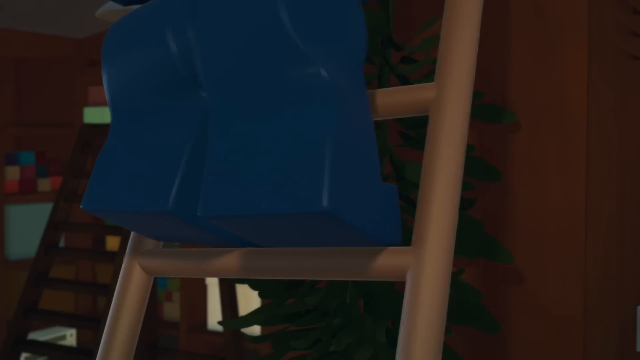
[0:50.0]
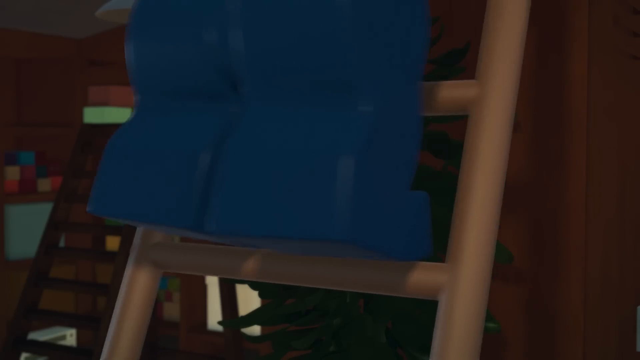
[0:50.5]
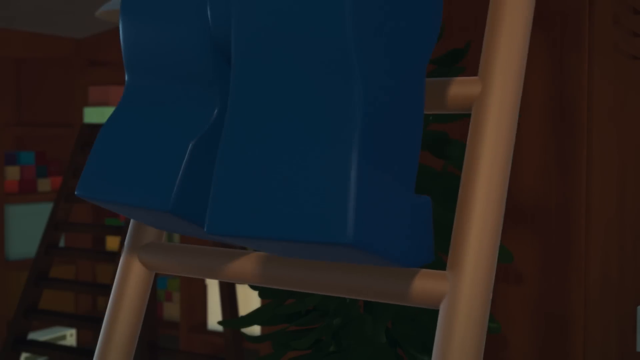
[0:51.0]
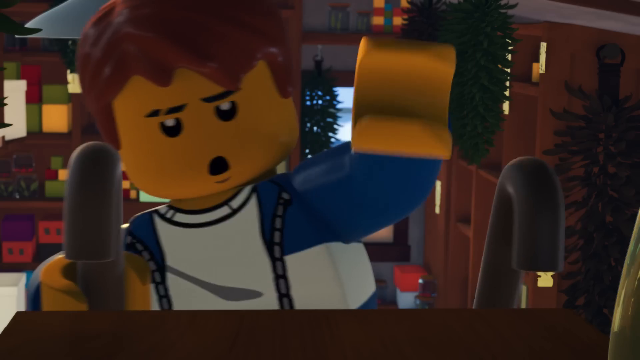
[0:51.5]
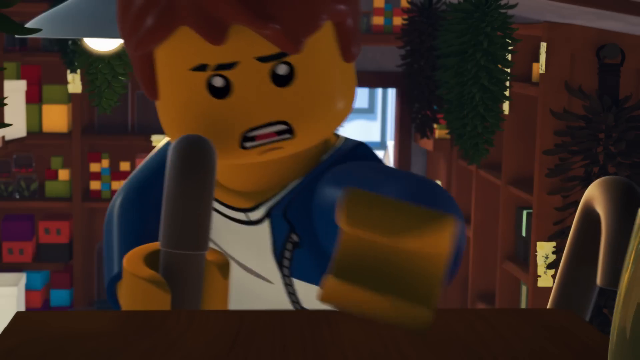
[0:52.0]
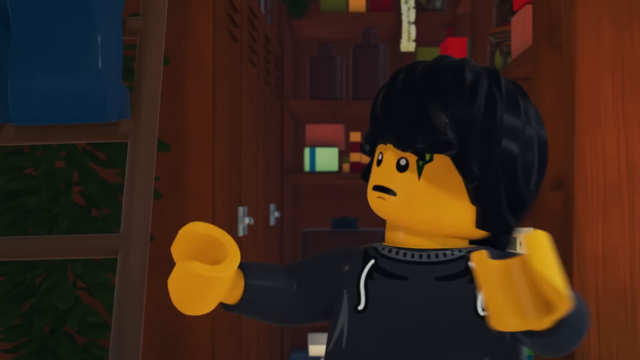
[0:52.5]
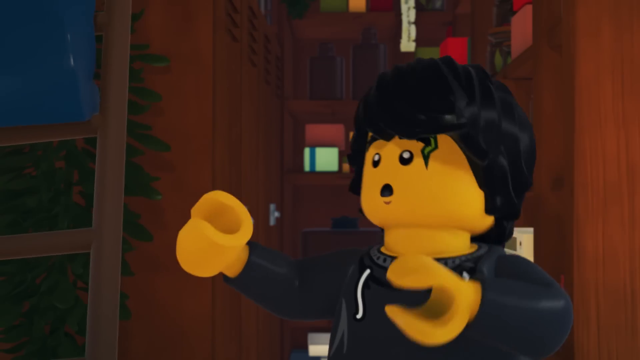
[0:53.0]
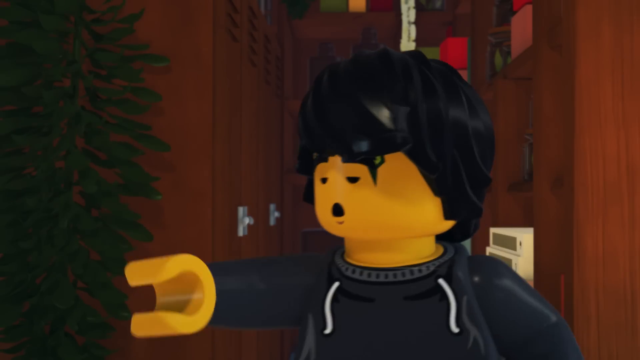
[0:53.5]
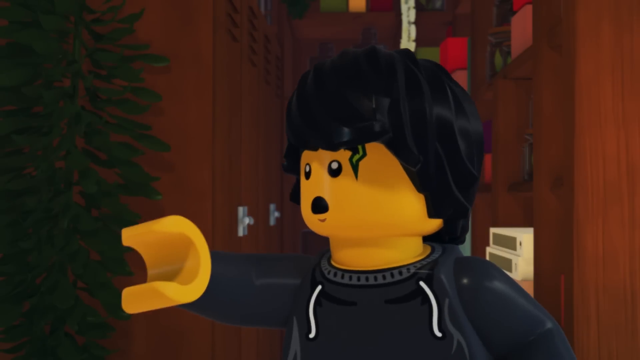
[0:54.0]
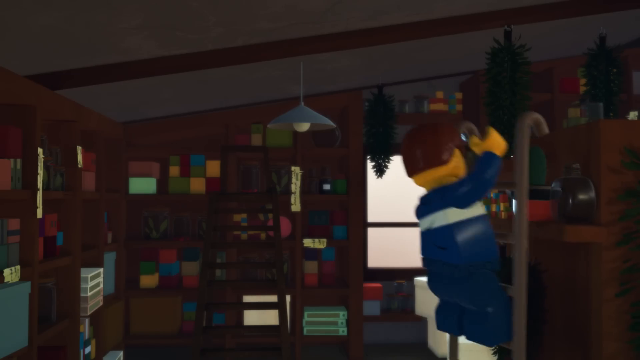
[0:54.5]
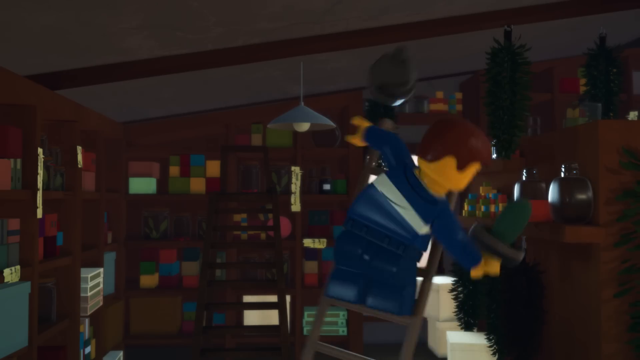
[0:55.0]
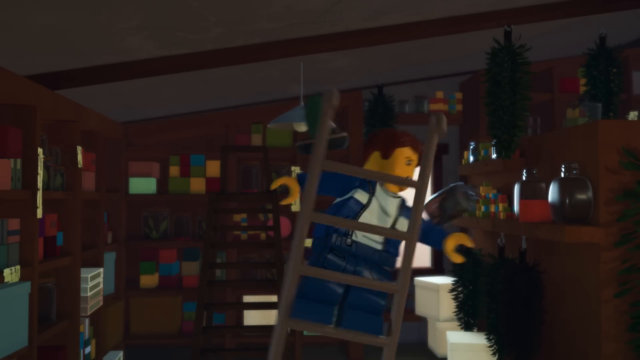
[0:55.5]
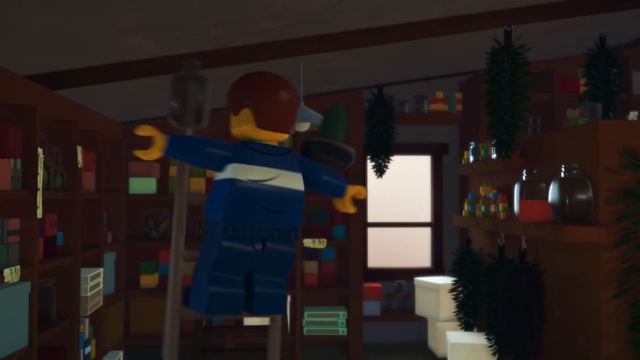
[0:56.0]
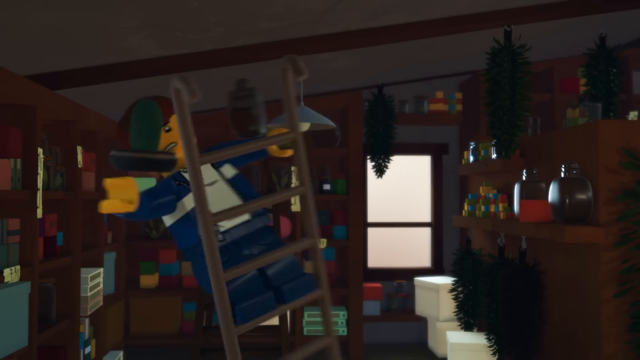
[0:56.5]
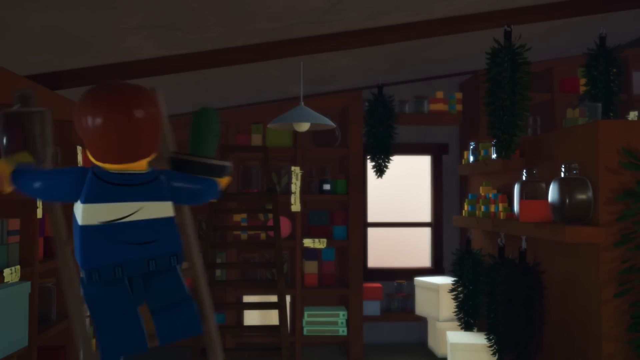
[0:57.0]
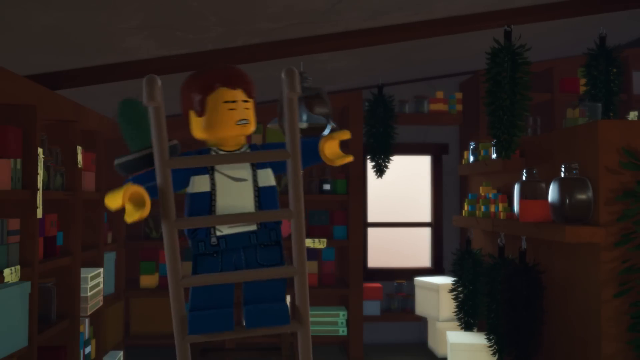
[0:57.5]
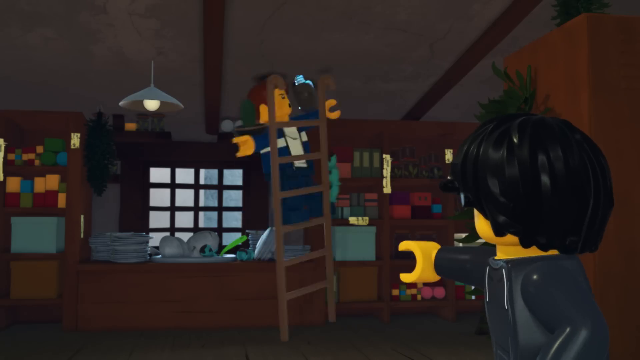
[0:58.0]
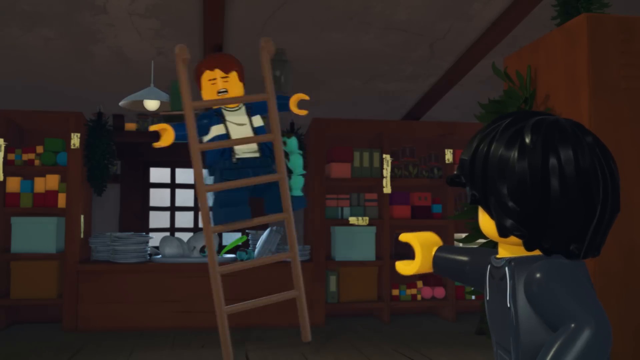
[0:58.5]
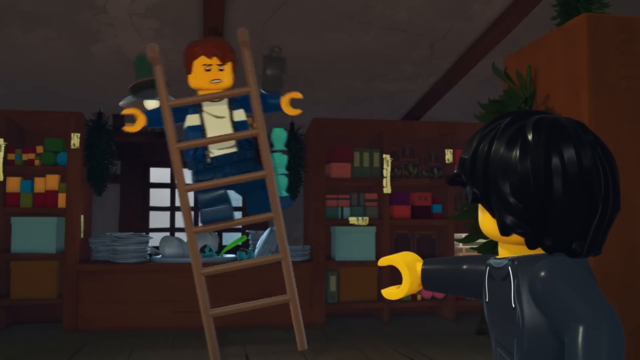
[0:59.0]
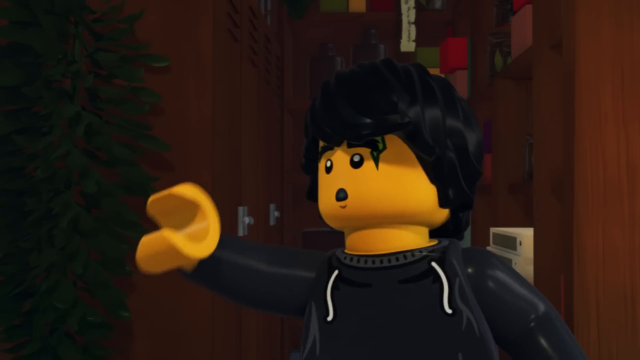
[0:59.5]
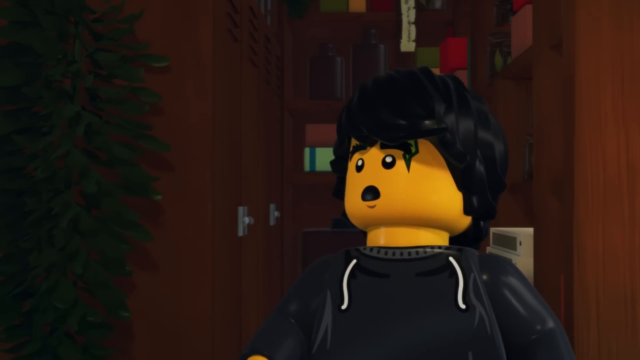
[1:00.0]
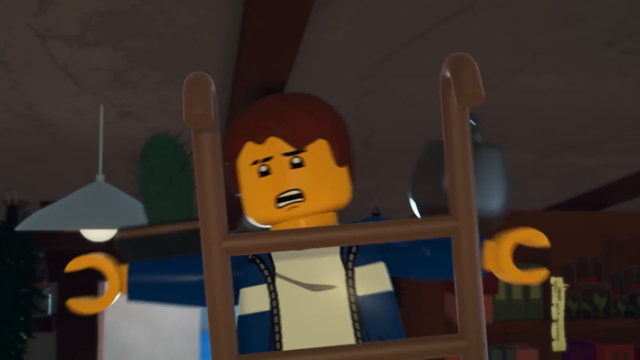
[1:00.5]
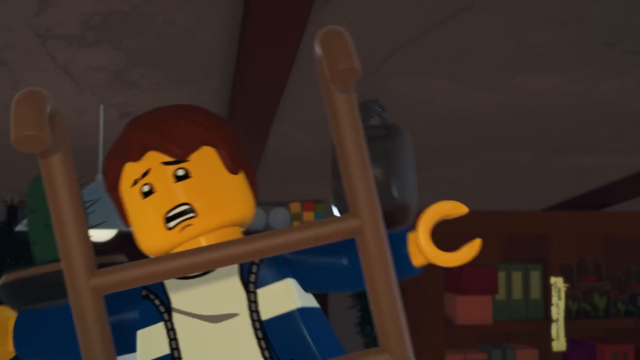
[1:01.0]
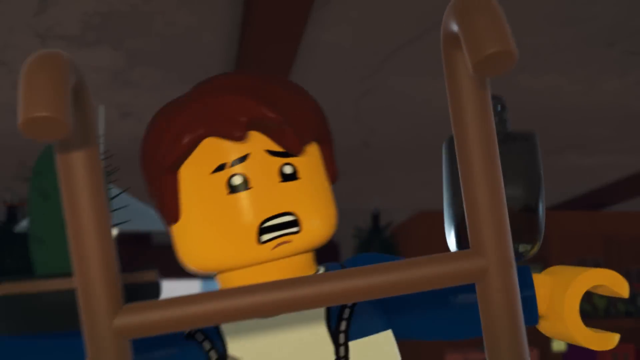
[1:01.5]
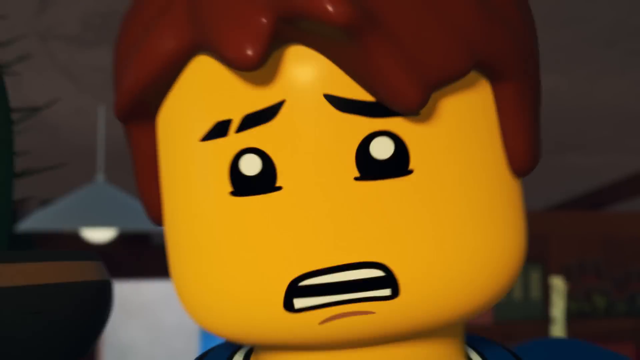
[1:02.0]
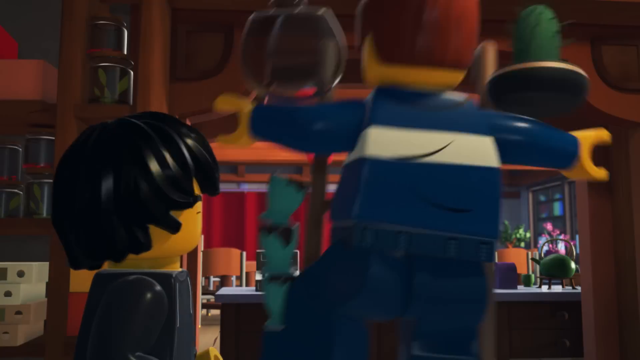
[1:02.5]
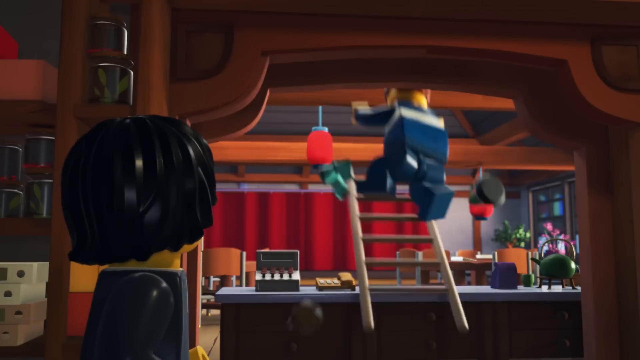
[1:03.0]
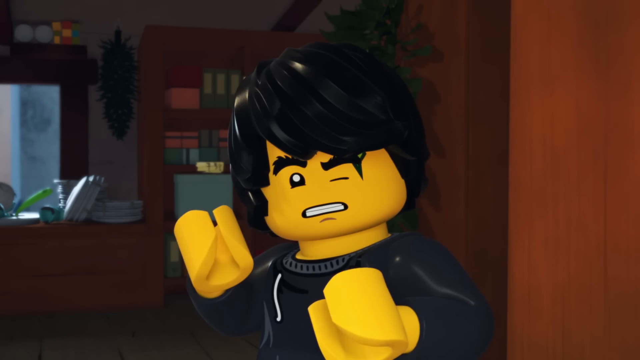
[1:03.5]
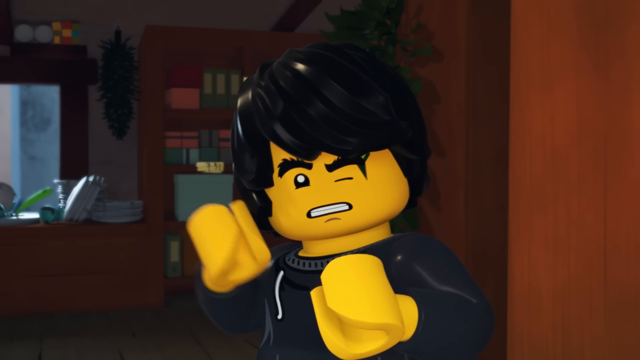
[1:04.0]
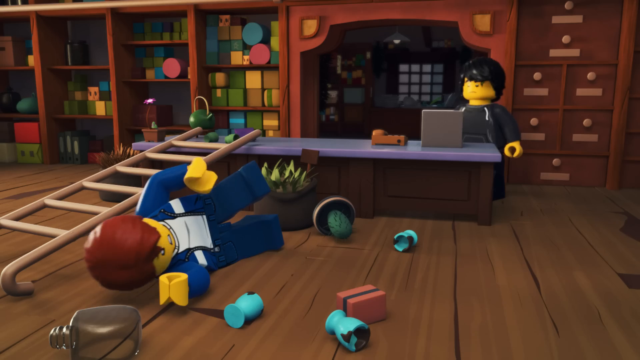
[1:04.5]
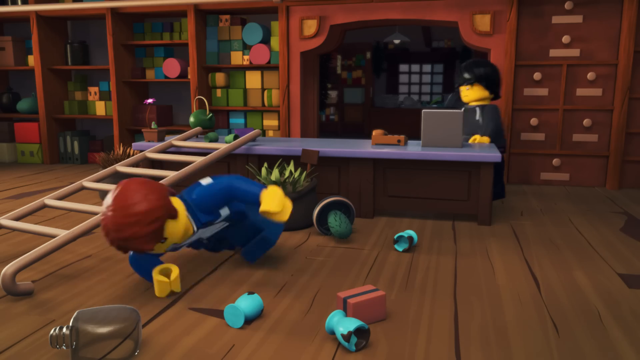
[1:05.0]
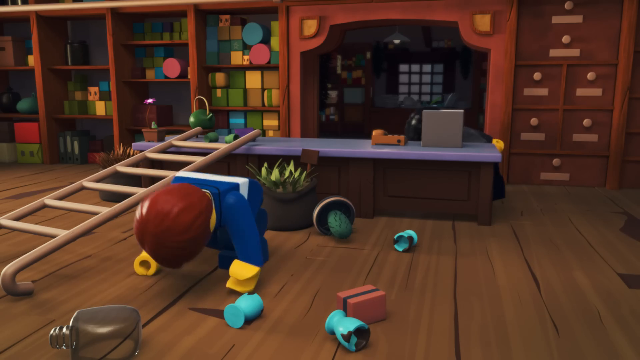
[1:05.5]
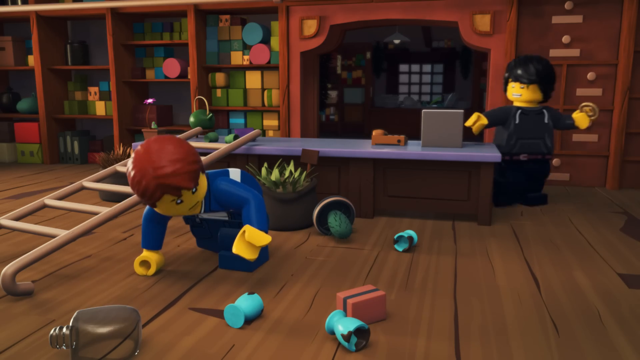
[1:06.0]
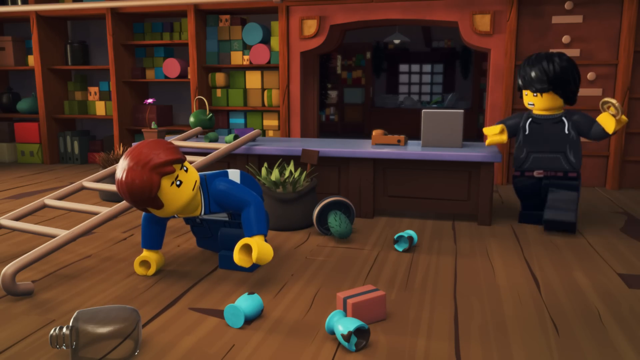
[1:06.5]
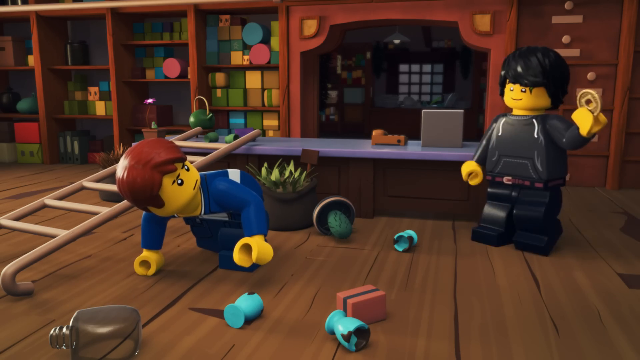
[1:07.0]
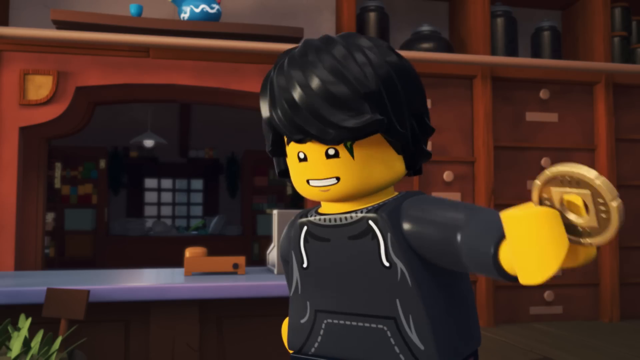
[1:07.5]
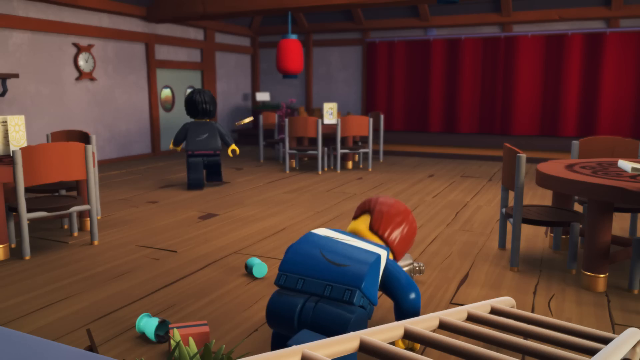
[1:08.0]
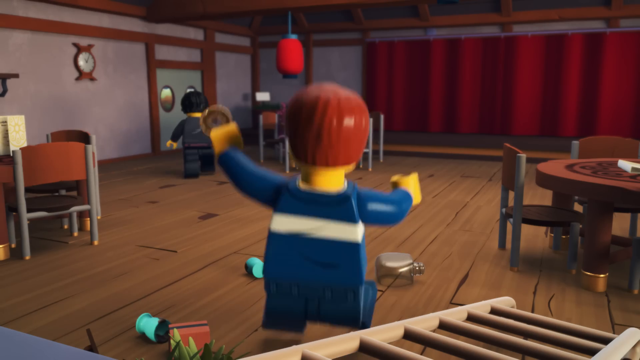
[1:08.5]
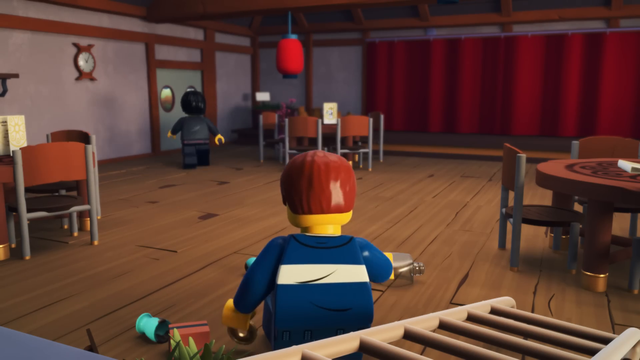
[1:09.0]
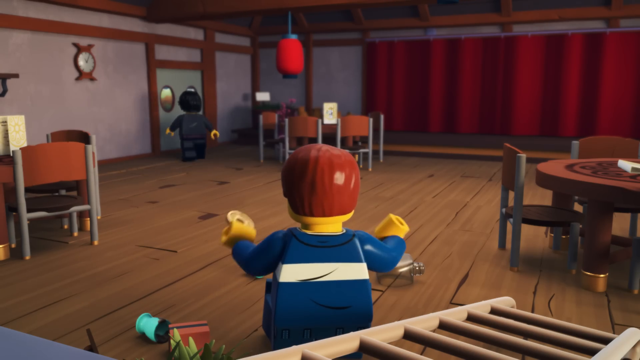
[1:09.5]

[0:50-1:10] The ladder starts shaking, and the one at the bottom starts panicking. The ladder topples all over the place and he is unable to stop it. Eventually the character falls over; he gives him the coin and leaves the waitress on the floor in shock.